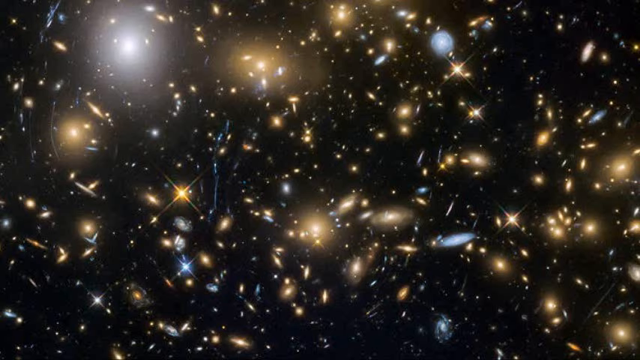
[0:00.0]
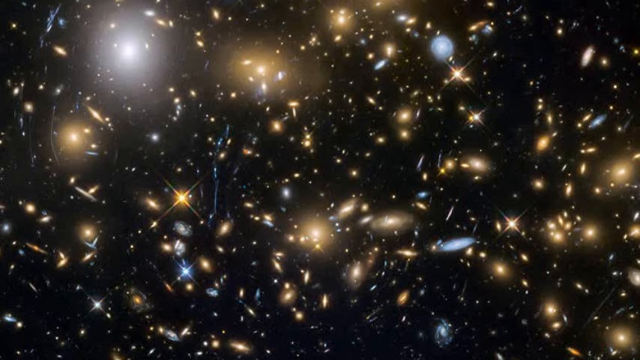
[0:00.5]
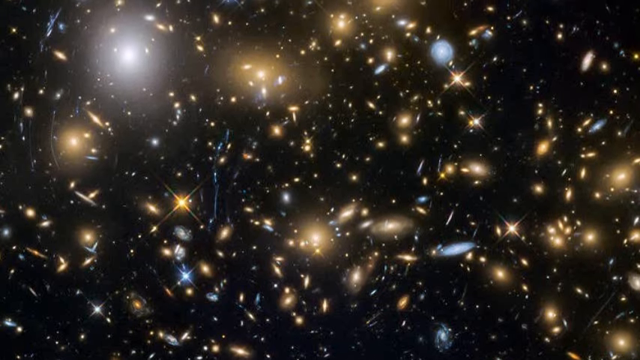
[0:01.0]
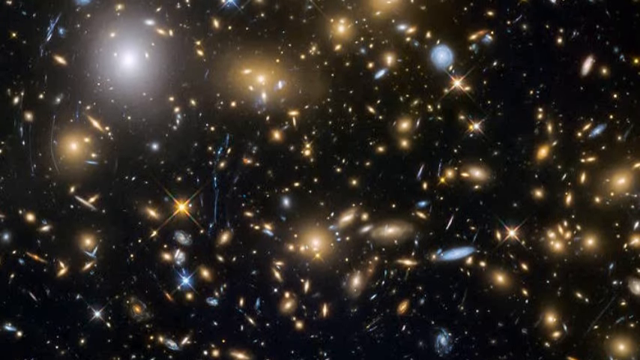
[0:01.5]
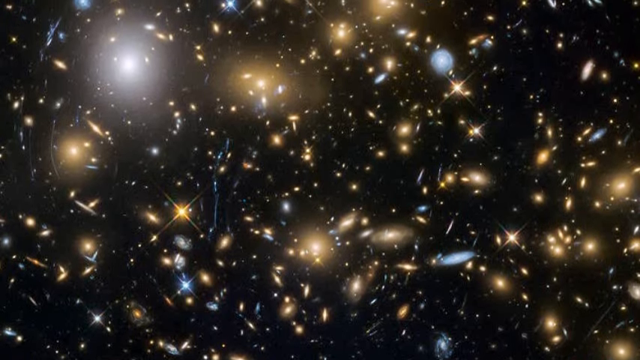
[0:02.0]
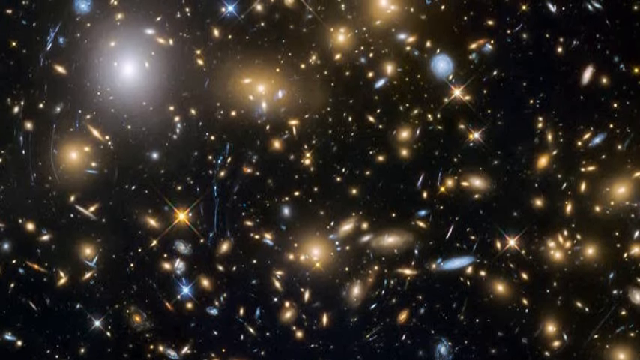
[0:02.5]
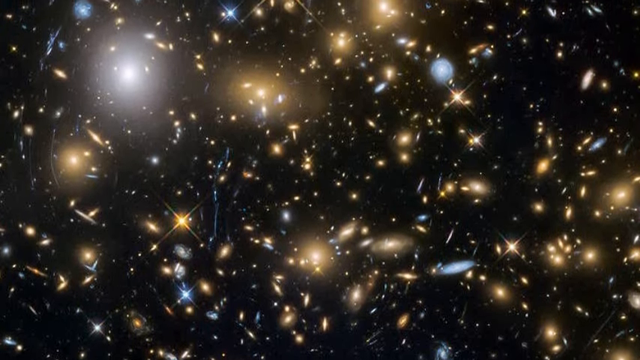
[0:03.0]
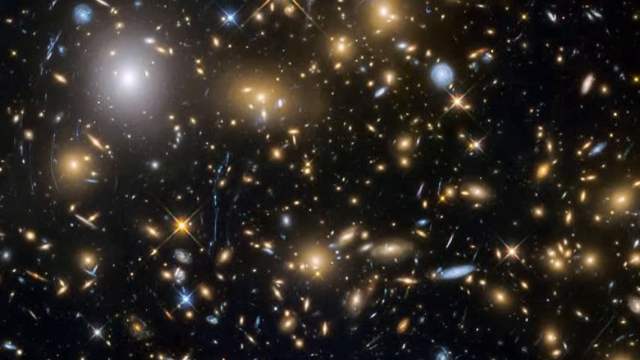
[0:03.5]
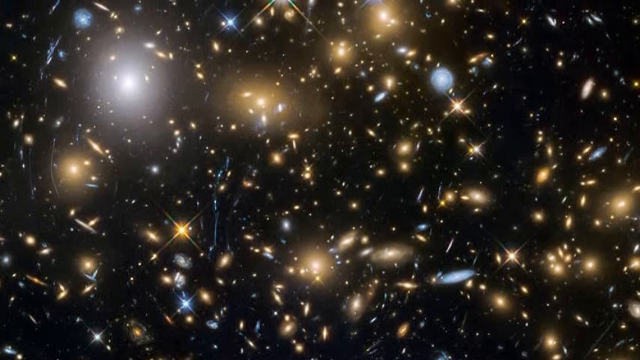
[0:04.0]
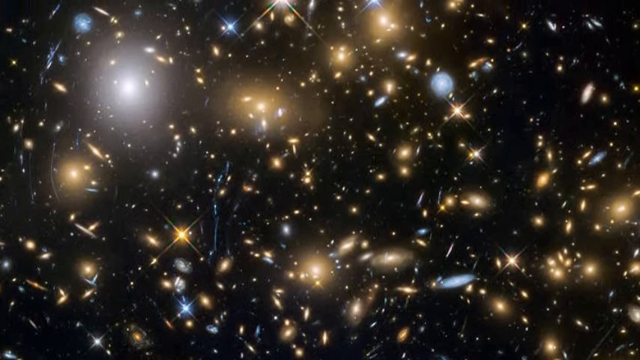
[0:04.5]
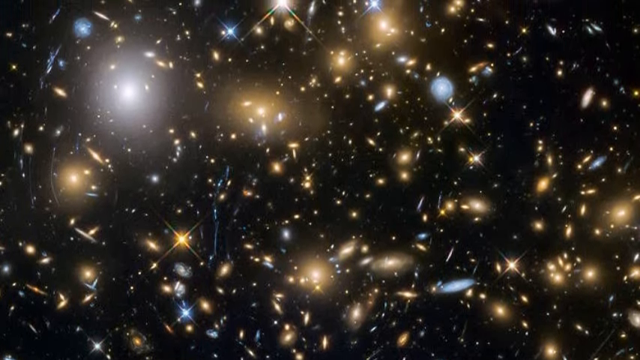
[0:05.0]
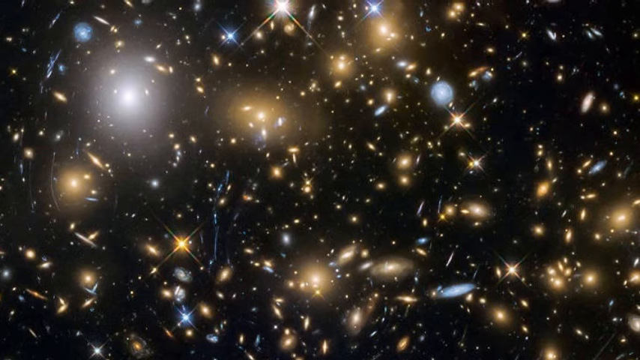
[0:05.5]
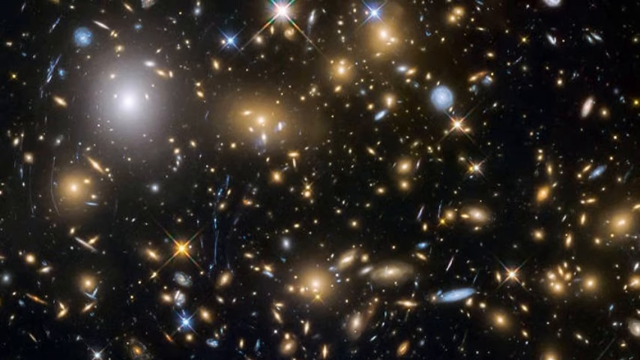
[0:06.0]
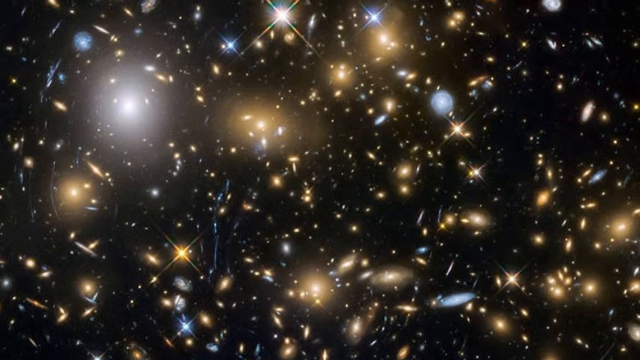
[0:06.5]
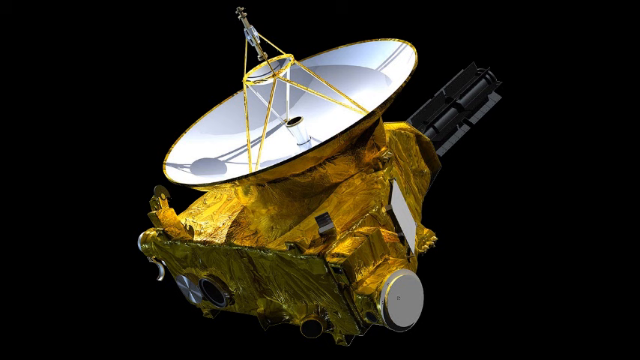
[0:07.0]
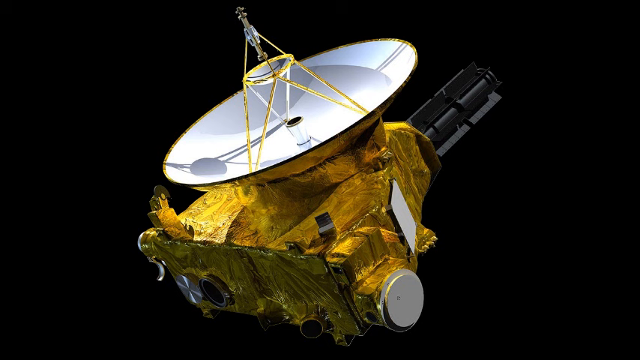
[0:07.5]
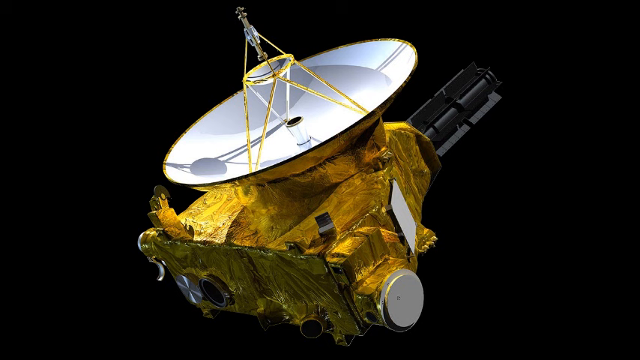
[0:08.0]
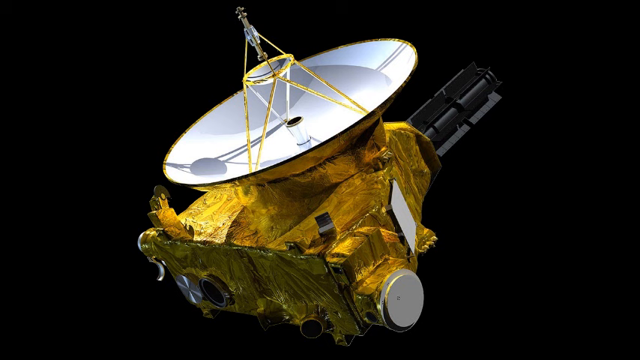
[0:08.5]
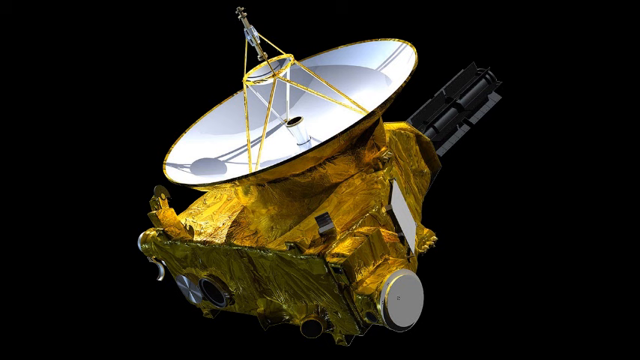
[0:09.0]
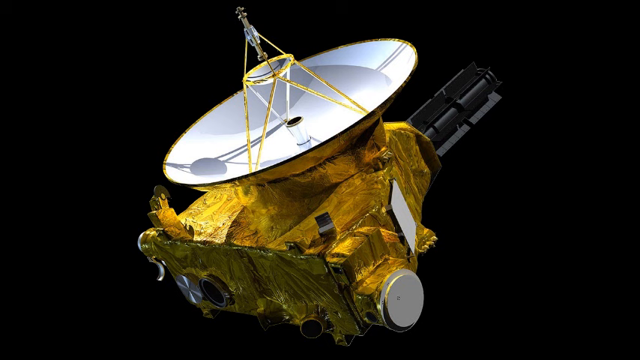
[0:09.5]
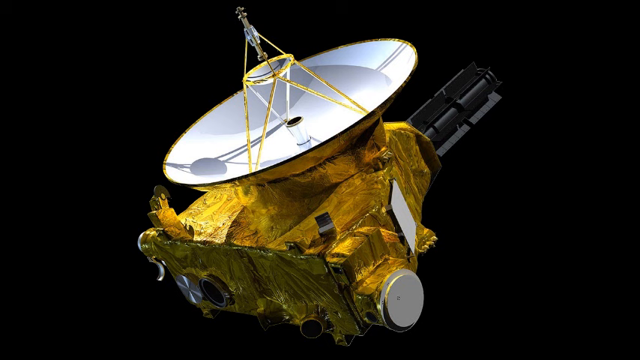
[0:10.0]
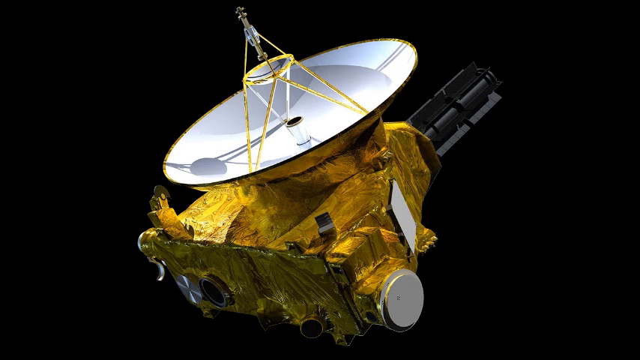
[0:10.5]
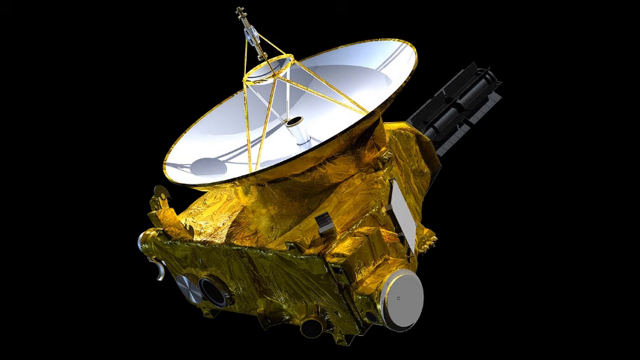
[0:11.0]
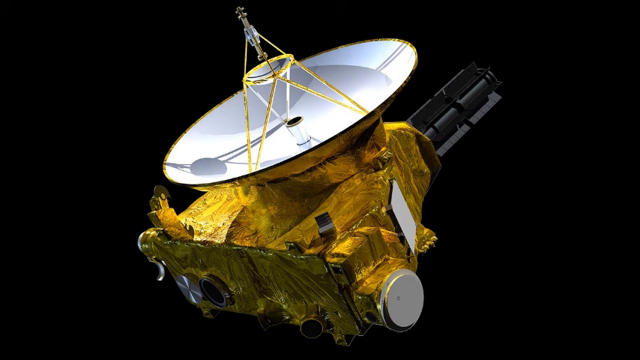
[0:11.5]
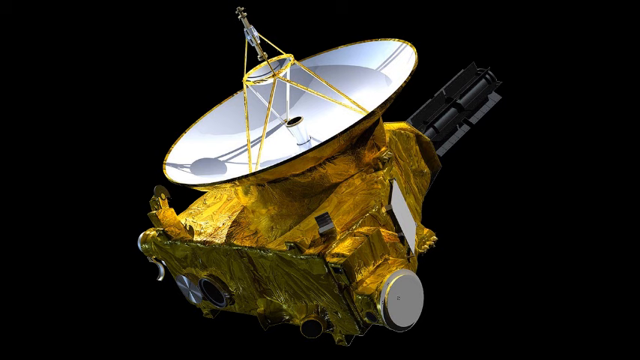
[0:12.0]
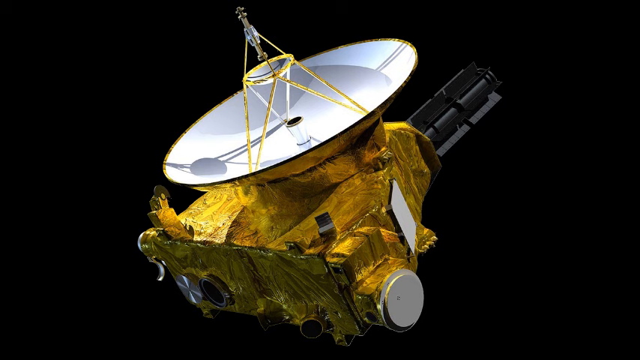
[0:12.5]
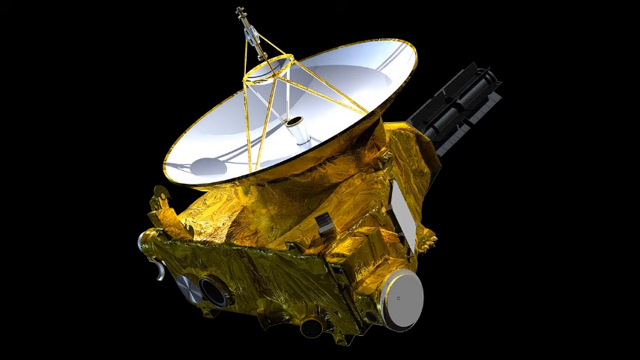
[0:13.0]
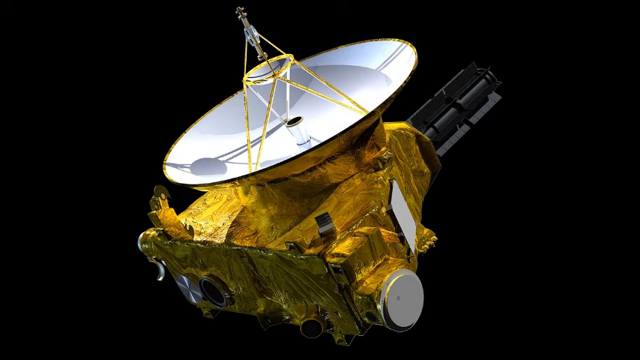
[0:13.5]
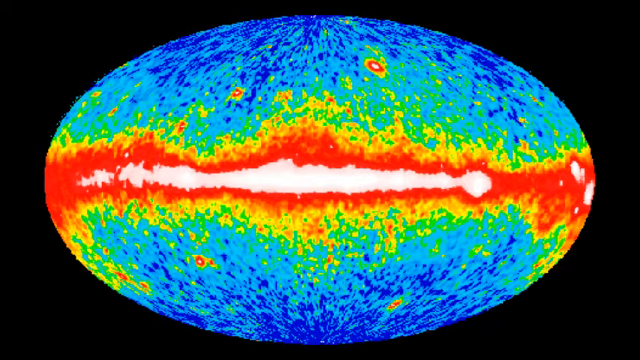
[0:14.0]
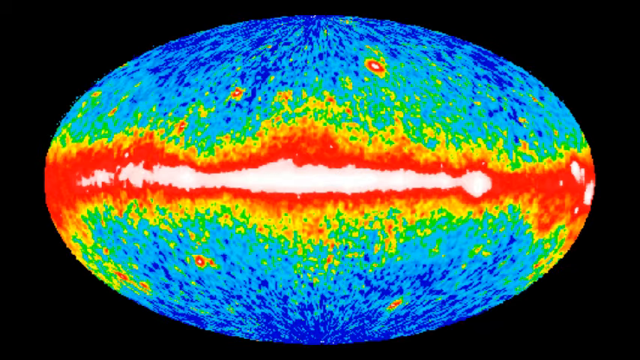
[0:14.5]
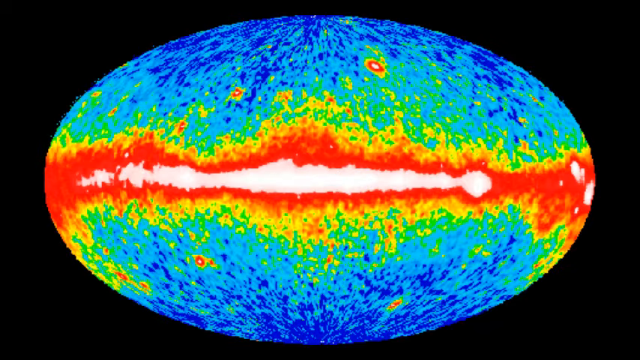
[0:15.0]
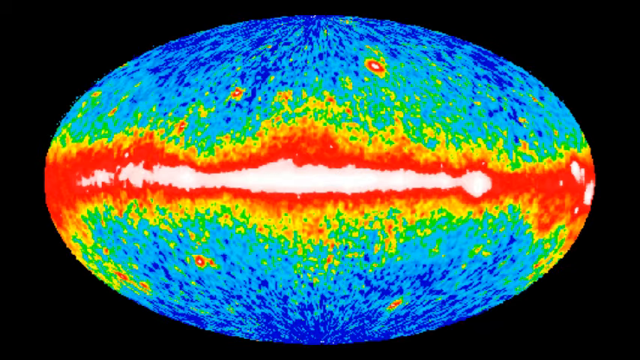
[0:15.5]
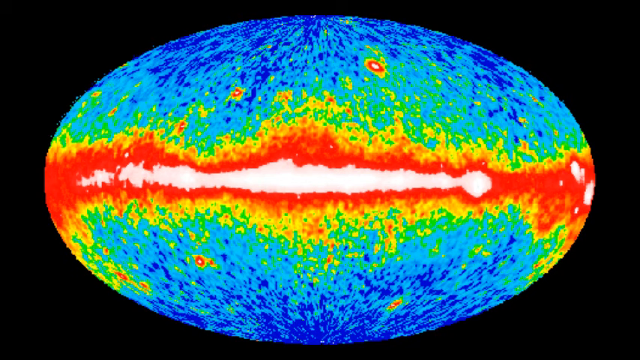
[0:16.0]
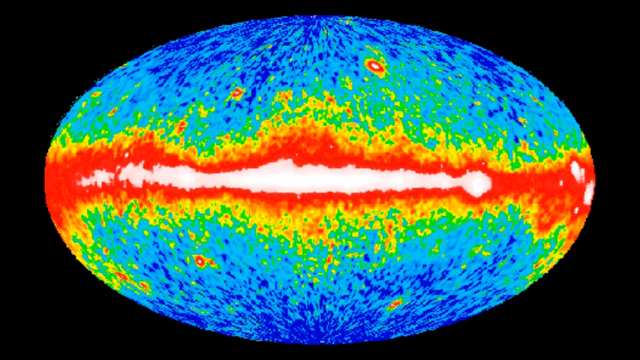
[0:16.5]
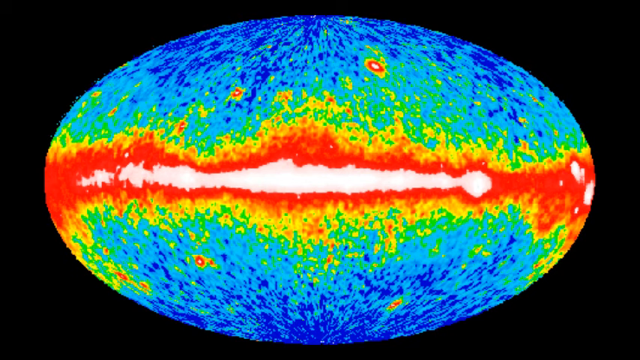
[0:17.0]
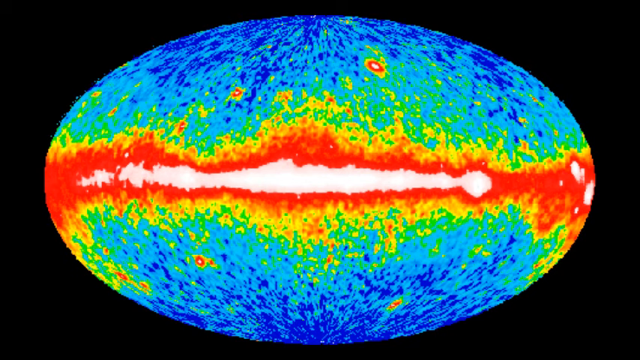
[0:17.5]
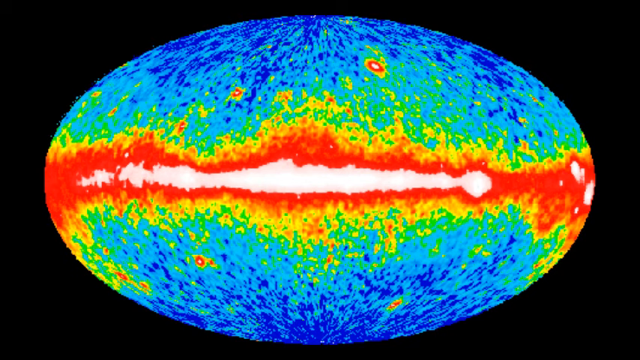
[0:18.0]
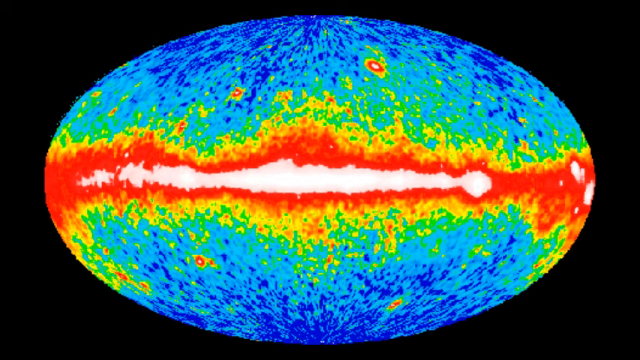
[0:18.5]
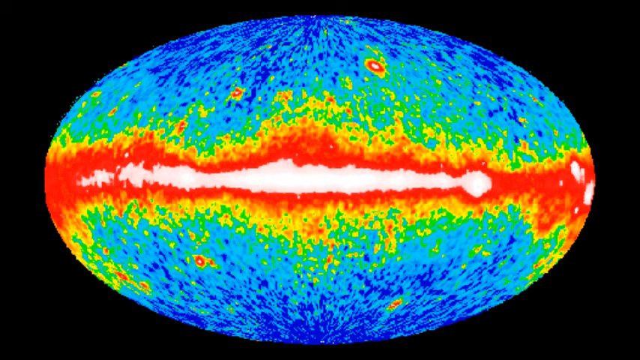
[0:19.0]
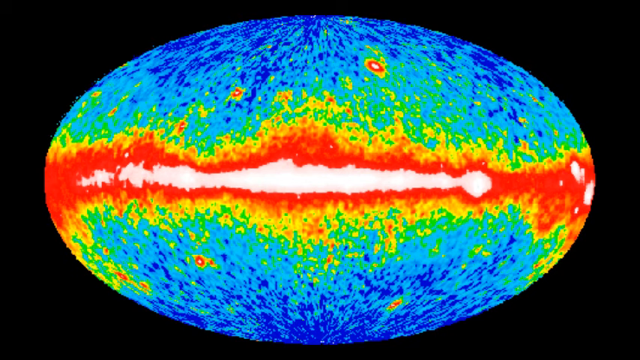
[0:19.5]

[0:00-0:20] Small yellow circles and a few small blue circles are scattered across a black background, with far more yellow than blue, as the view slowly pans up a little. Some of the yellow circles are a bit bigger, and some of the blue ones are a bit bigger too. The video then cuts to a satellite pointing up to the left. Underneath it, the structure is a yellow, kind of rectangular shape, and up to the right of it is something that looks almost like a laser. Next it cuts to a black background with an oblong circle in the center, reaching almost to the top and almost to the bottom and about an inch from the left and right edges. It is white straight across the middle, followed by a red border and then yellow, on both sides. Light blue and then dark blue fill the top and bottom. It almost looks like a little face, but it seems to be some sort of odd design.